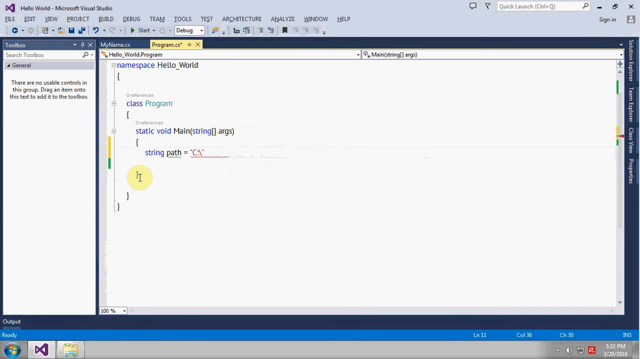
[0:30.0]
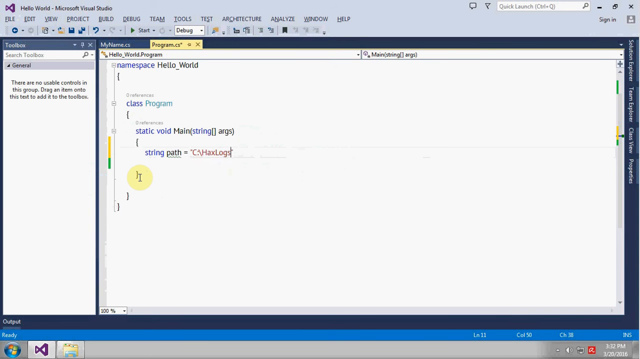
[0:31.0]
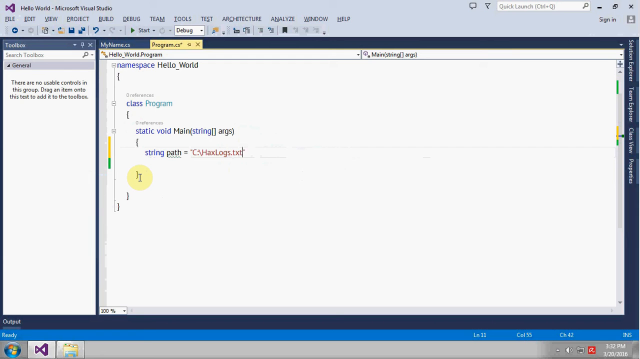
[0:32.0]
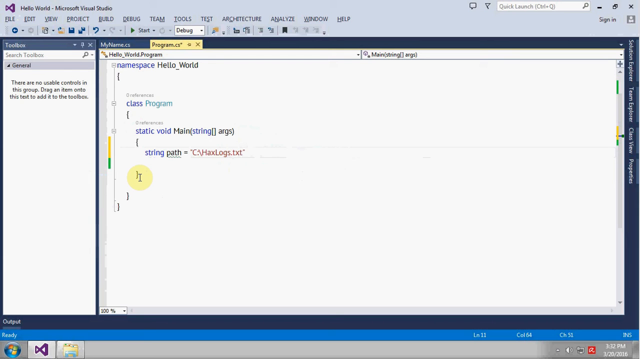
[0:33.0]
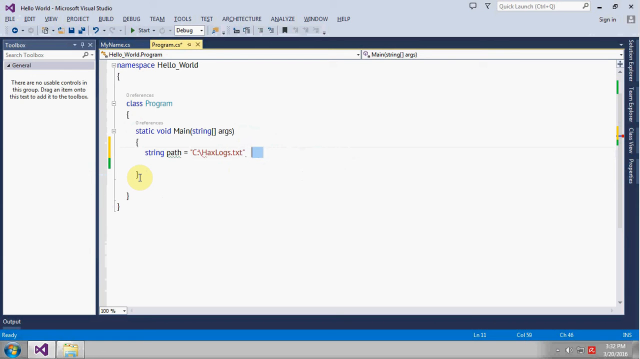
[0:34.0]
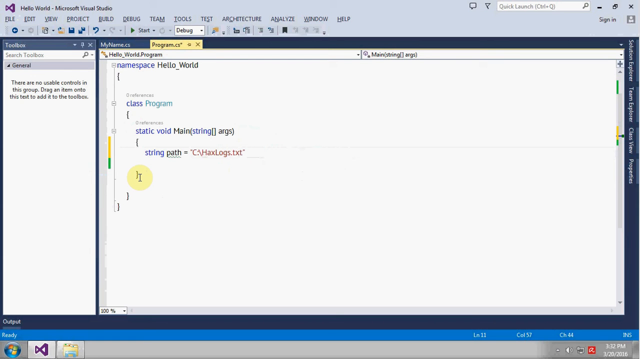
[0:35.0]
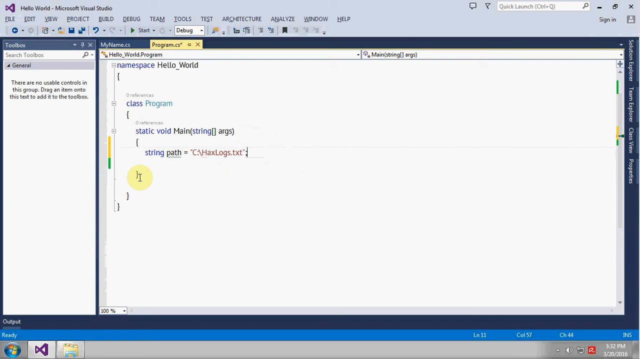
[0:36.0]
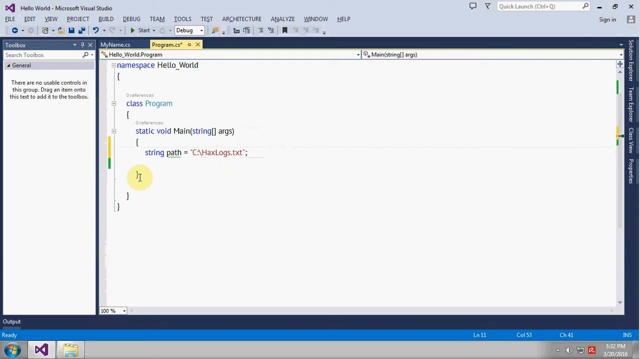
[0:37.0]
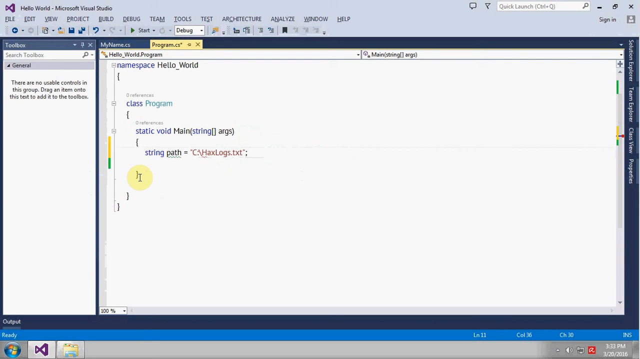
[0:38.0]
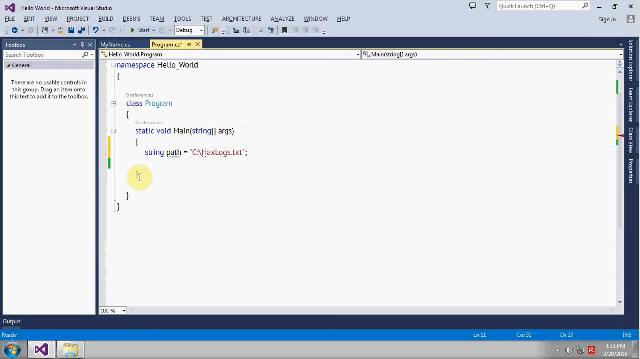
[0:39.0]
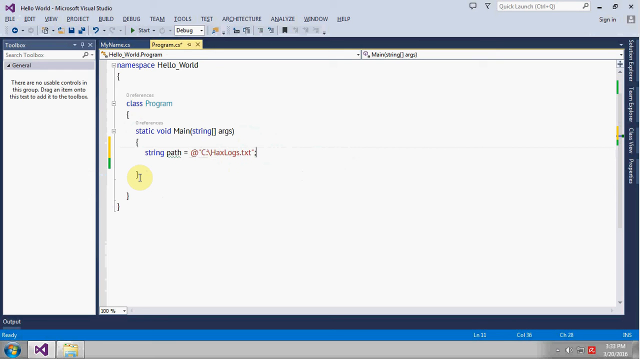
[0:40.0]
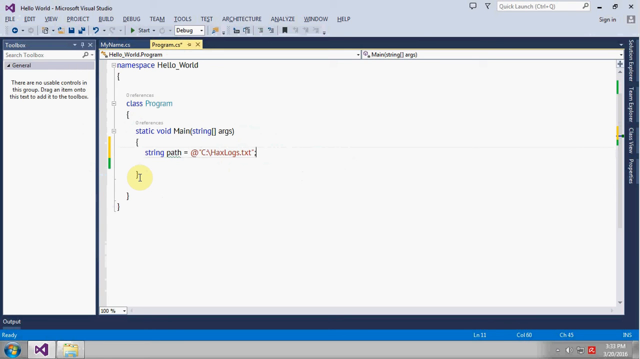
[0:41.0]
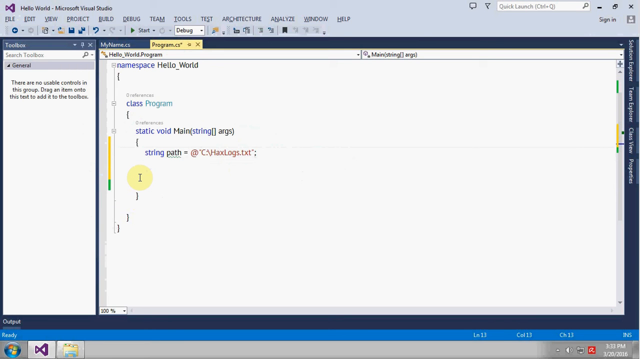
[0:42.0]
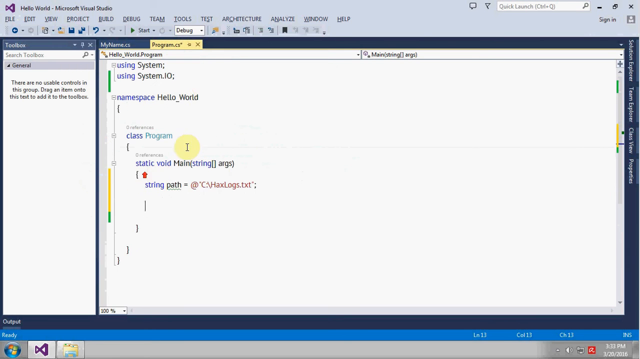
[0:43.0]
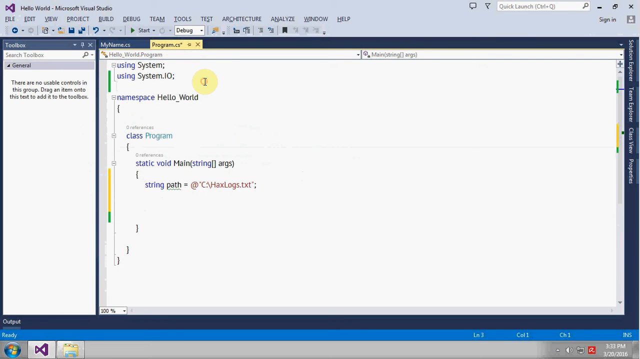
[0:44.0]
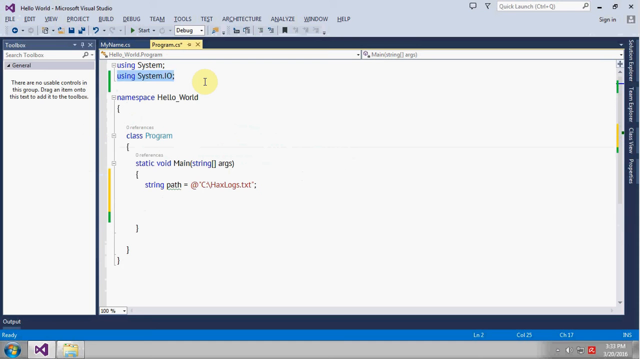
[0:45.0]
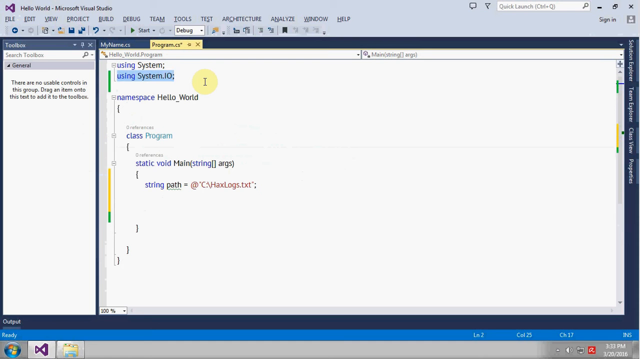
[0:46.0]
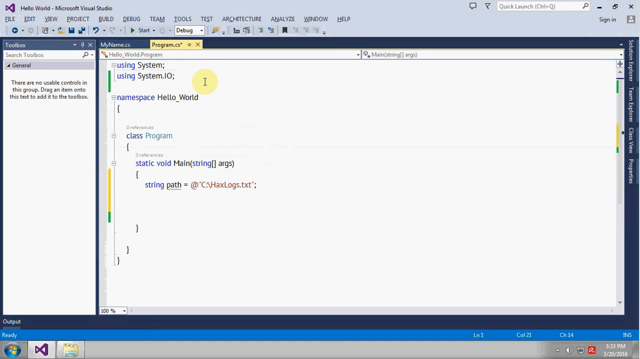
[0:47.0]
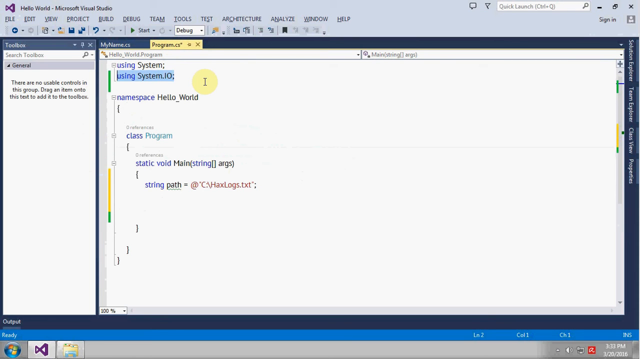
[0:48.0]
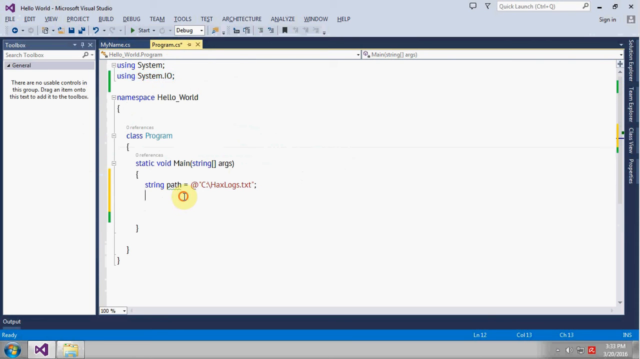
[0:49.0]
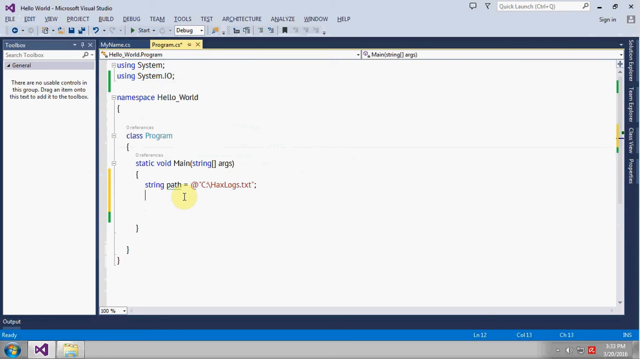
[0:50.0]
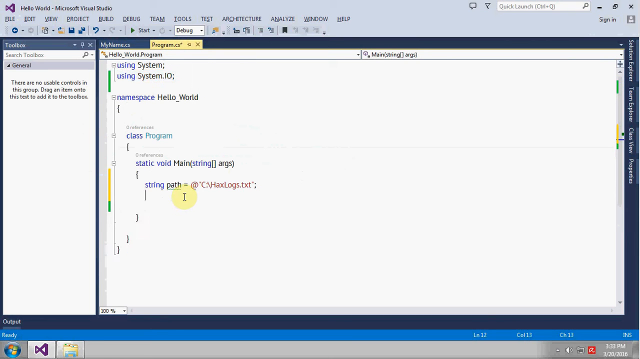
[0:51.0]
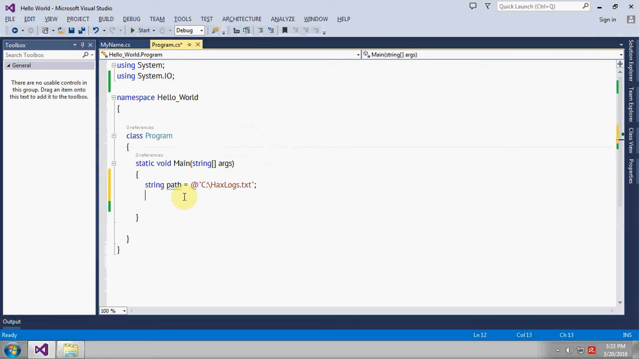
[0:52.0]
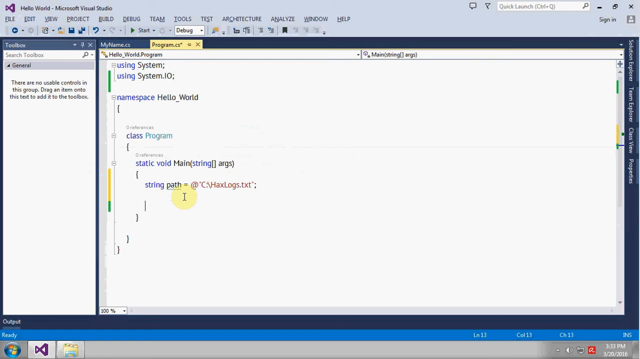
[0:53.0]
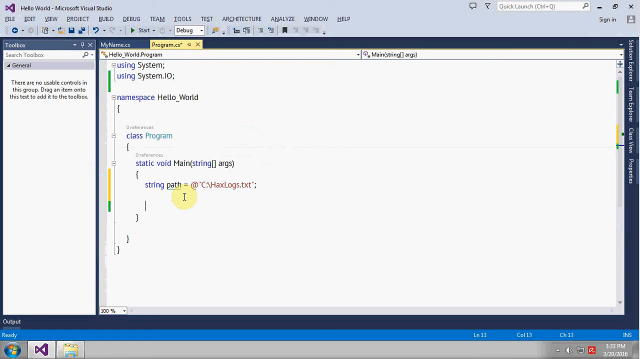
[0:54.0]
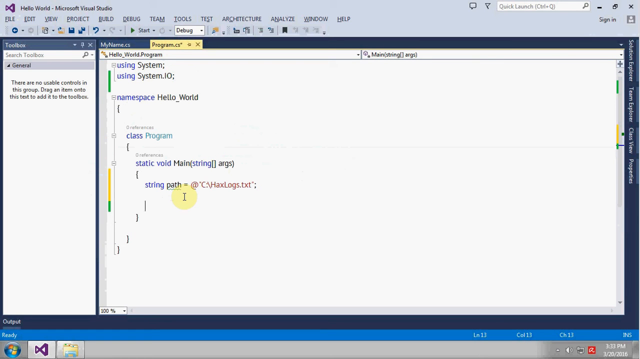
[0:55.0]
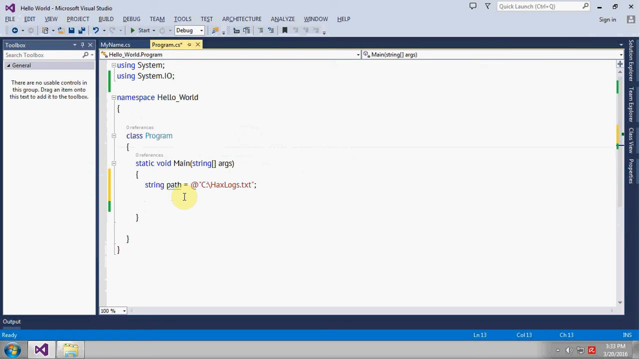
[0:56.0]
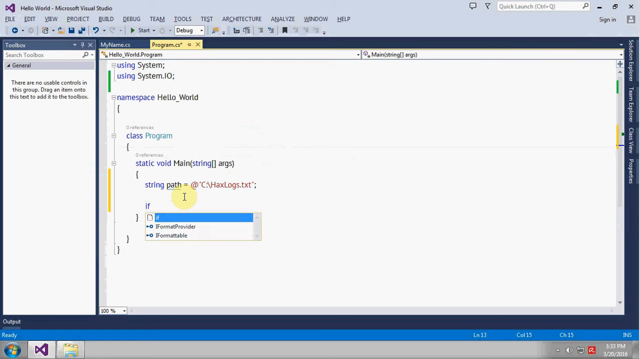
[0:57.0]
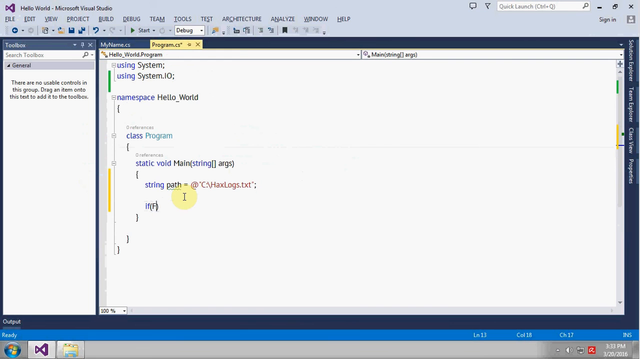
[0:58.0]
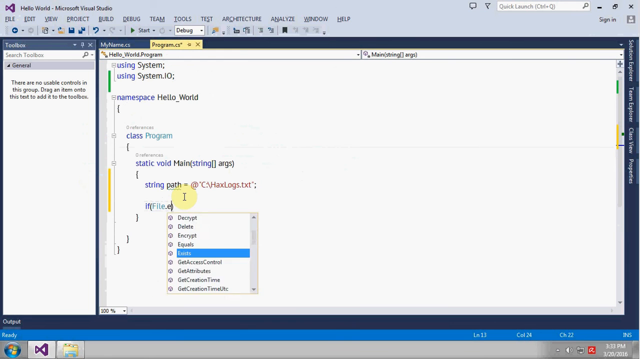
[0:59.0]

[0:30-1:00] In Microsoft Visual Studio, the path "c-\has logs.txt" is typed inside inverted commas after string path in the hello world program. The overall screen is white, with a light blue taskbar at the top and a grey Windows 7 taskbar at the bottom; a few icons are in the bottom right, and the date and time are shown. "using System.IO" is added to the top of the Hello World program, and more code starts being added below haslogs.txt, with the line at the bottom beginning with "if".